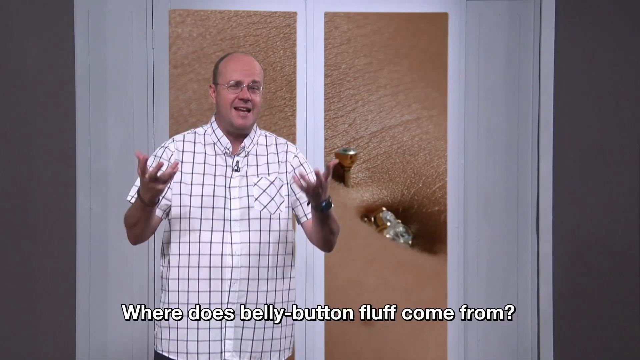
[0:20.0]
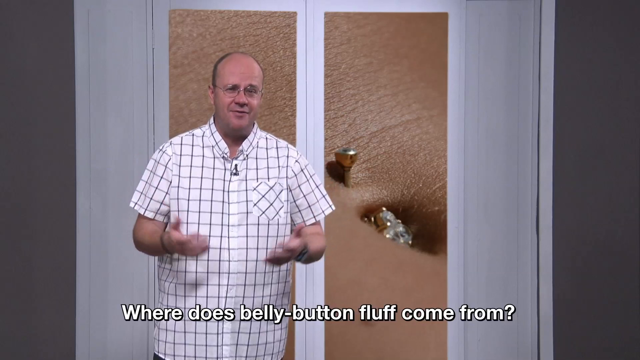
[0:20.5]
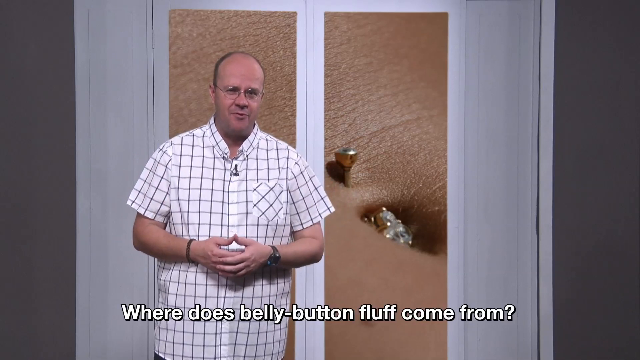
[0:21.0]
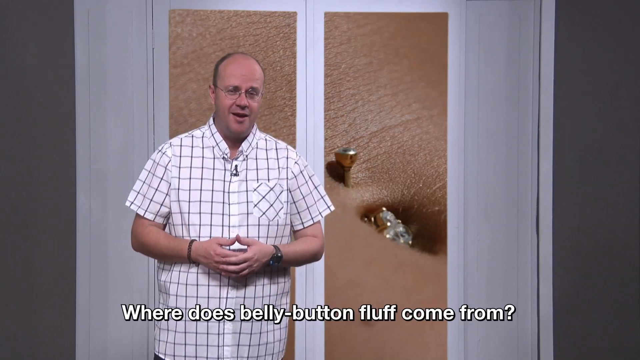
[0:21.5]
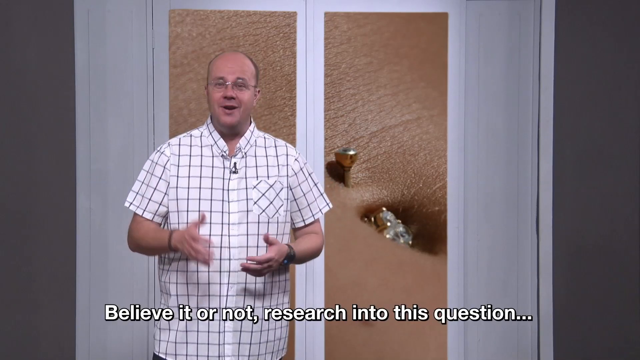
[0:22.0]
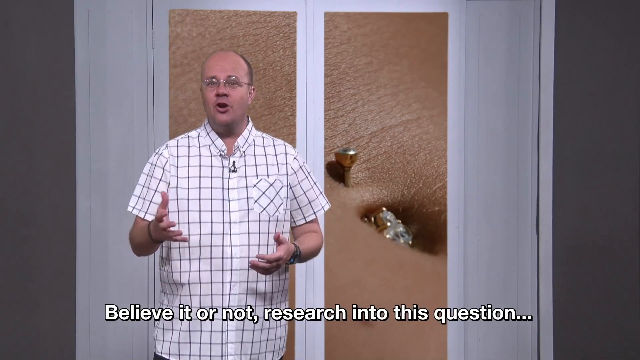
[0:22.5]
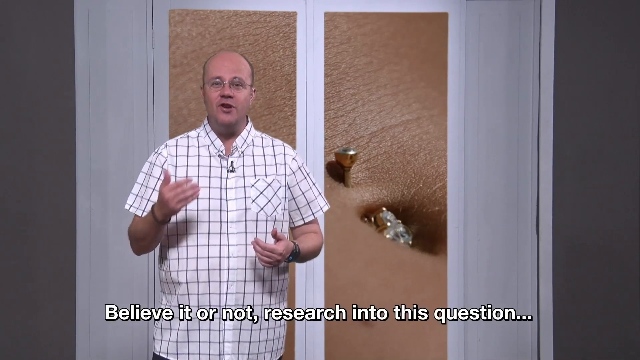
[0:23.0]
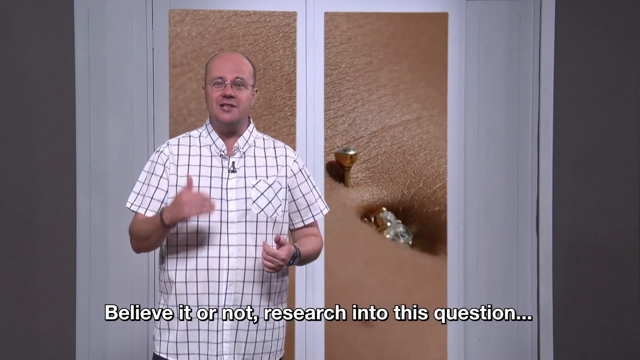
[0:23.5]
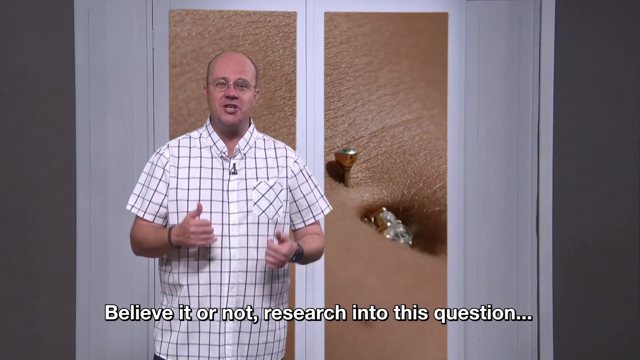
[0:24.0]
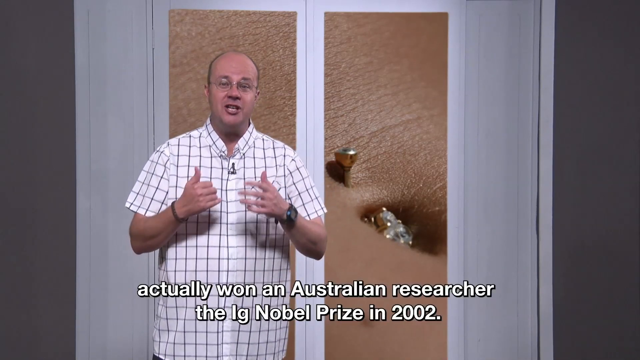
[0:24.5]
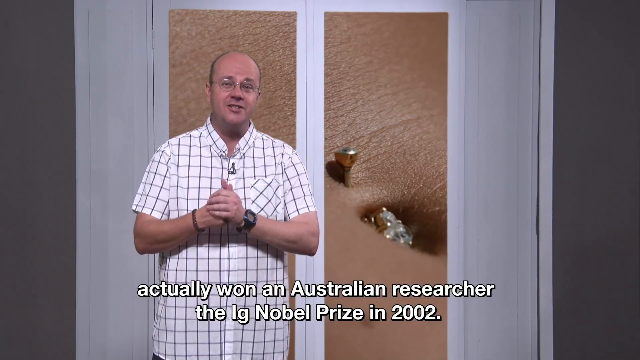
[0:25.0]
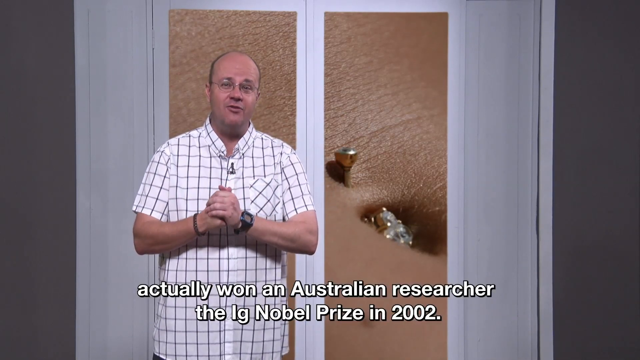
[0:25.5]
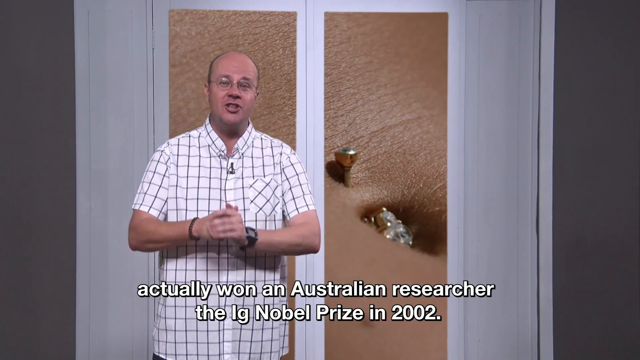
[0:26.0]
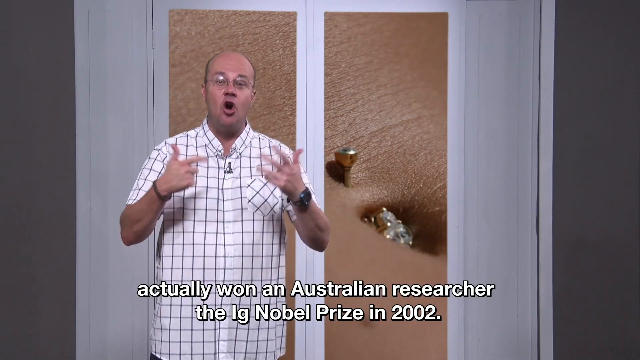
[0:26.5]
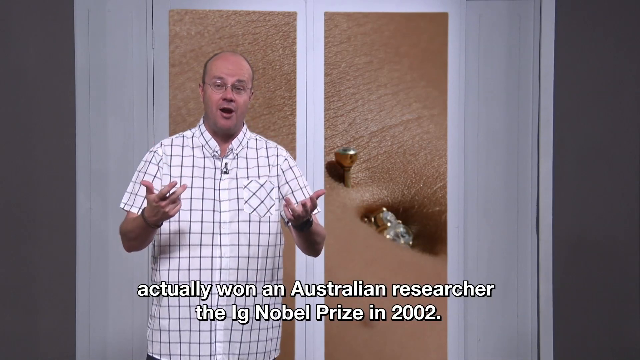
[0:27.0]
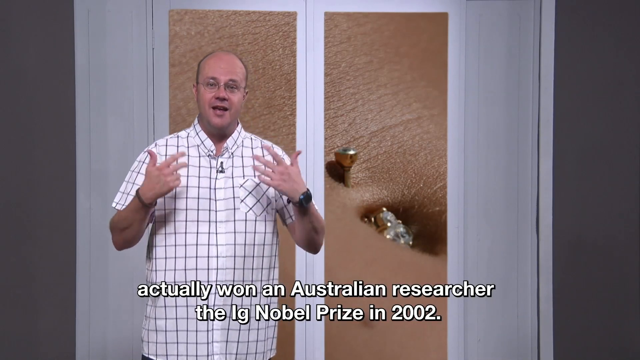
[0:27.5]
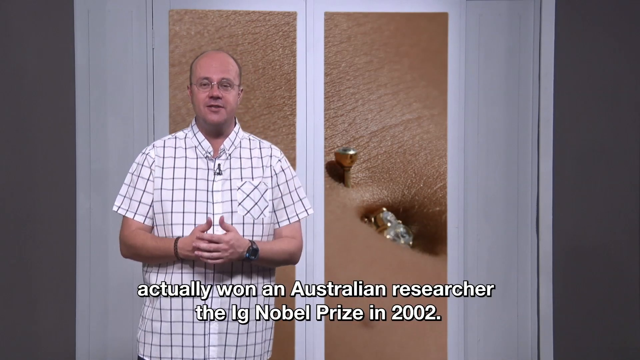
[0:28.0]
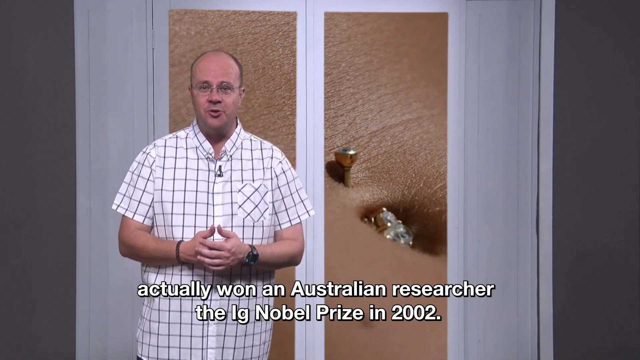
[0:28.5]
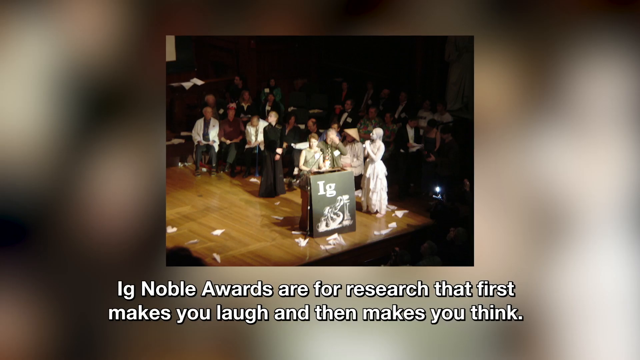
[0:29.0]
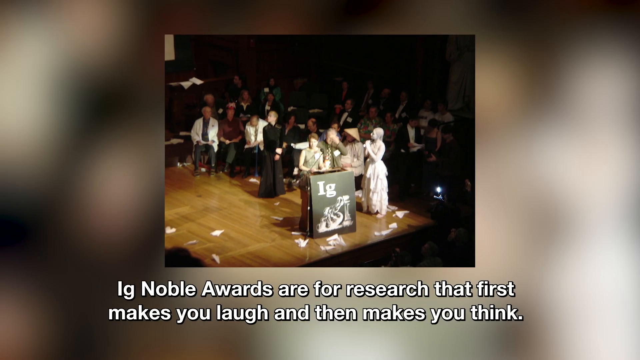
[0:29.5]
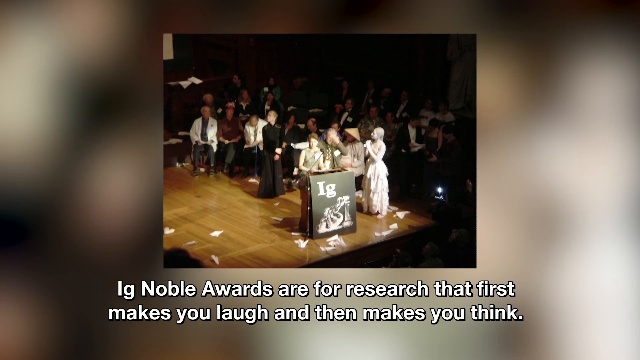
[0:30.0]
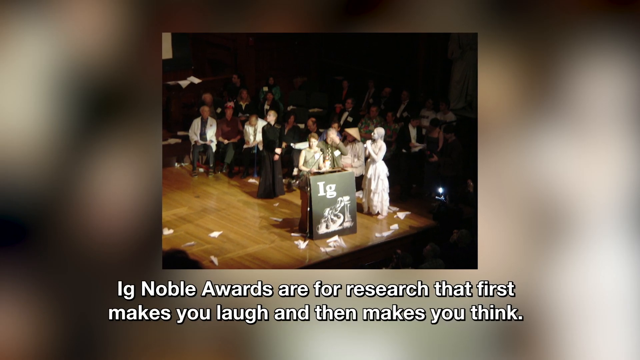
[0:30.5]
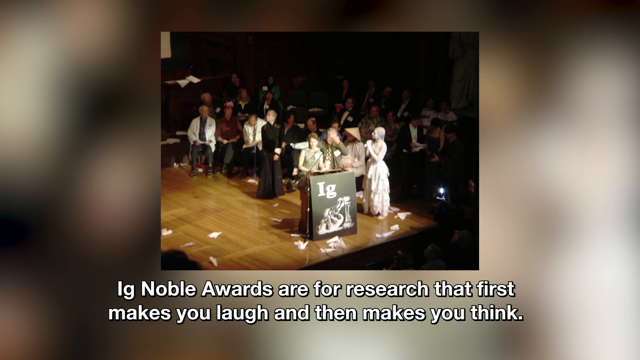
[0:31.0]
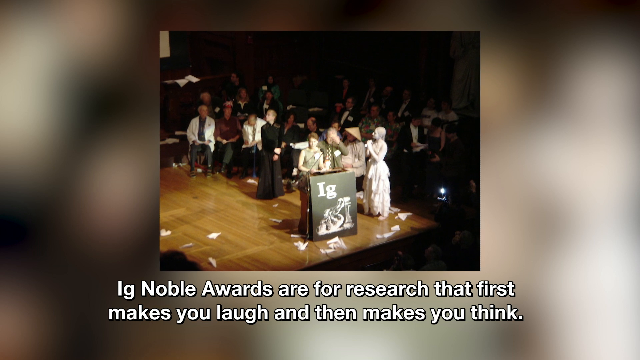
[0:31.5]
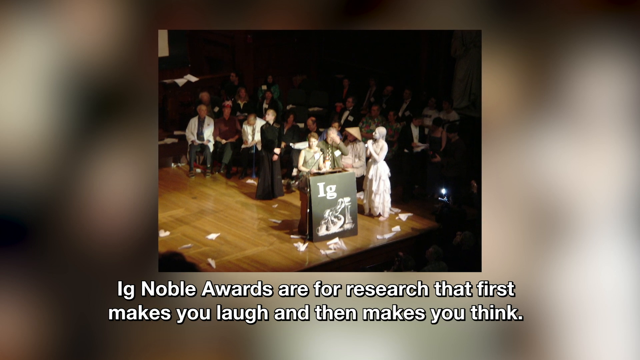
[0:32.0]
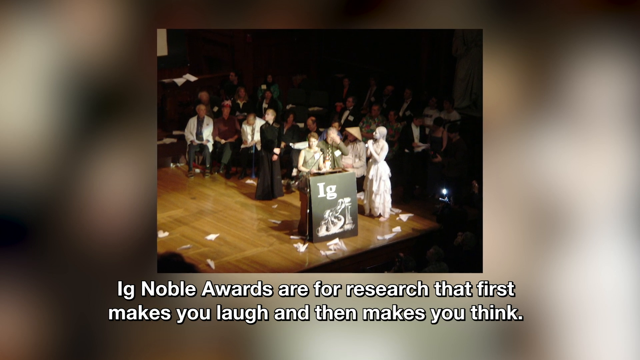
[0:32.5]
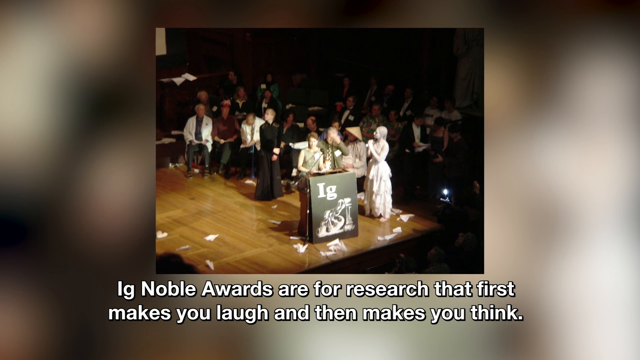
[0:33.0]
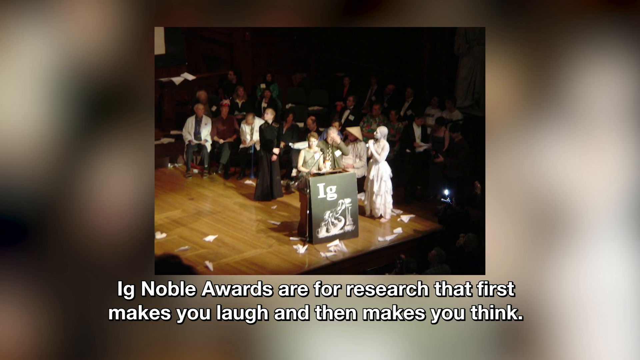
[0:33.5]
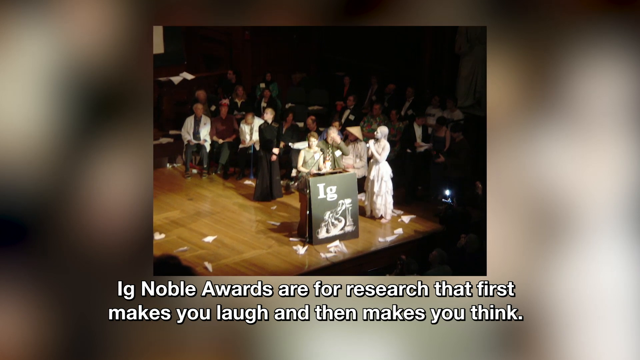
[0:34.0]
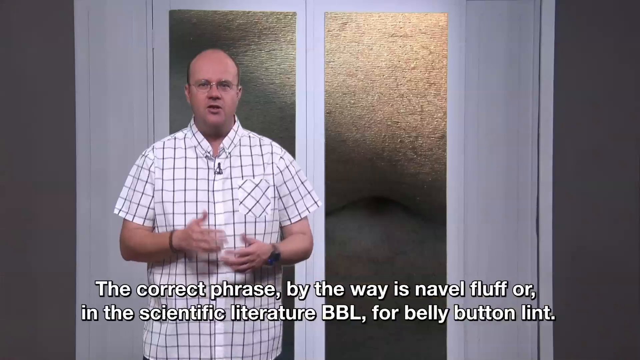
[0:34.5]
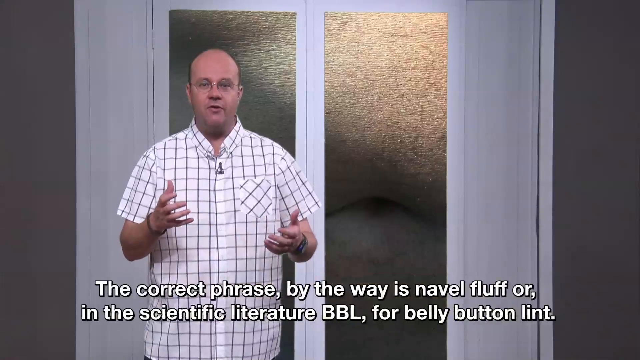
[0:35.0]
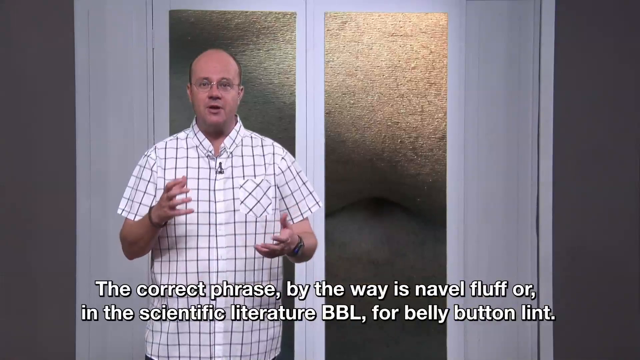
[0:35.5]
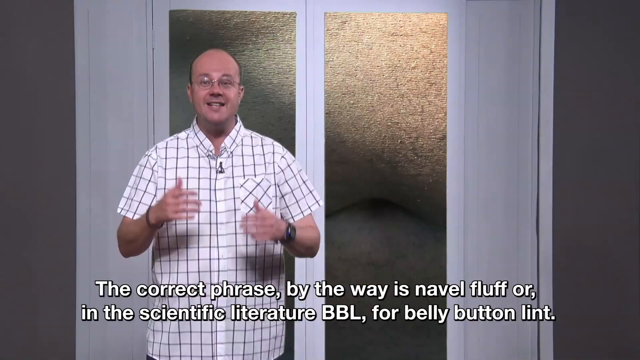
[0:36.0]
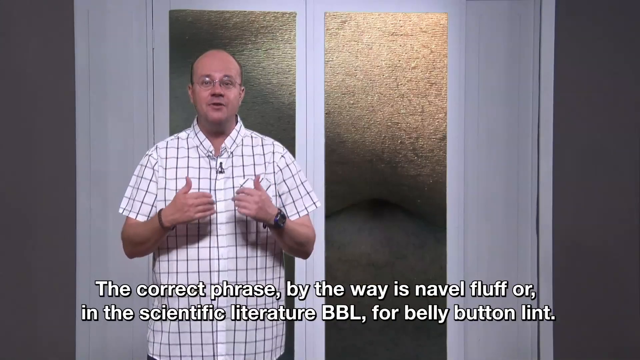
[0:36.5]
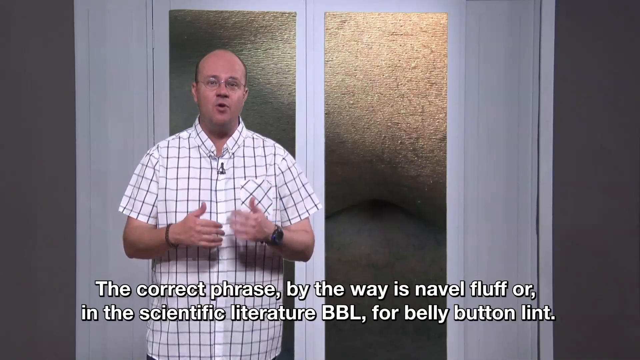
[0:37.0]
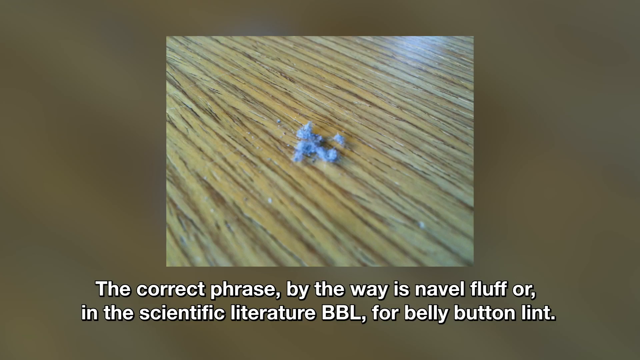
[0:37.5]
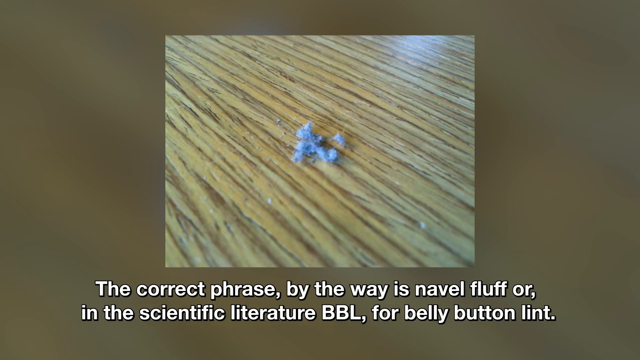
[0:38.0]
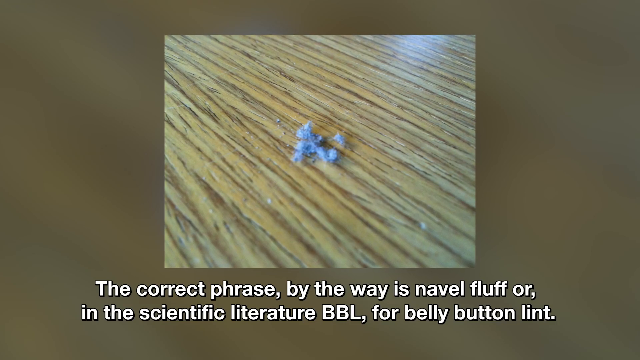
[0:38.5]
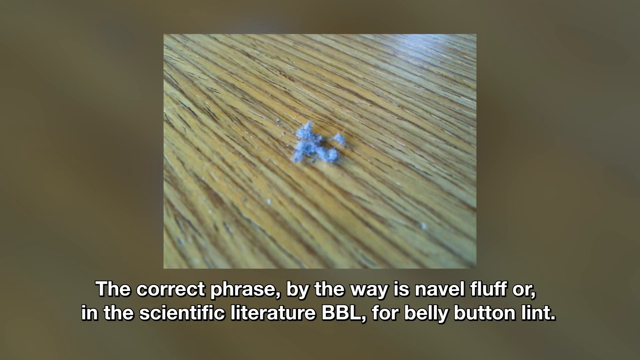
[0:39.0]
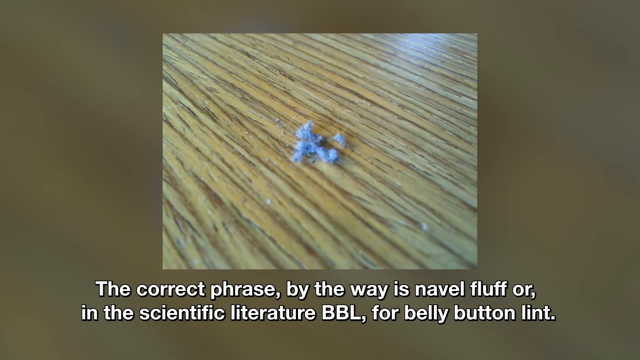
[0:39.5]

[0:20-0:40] A person is speaking, with closed captions underneath him that read: "where does belly button fluff come from? Believe it or not, research into this question actually won an Australian researcher the LG Nobel Prize in 2002. LG Nobel Awards are for research that first makes you laugh and then makes you think. The correct phrase, by the way, is navel fluff or the scientific literature BBL for belly button lint." A picture of lint on a table is shown, and the segment ends with the question of where belly button lint comes from.